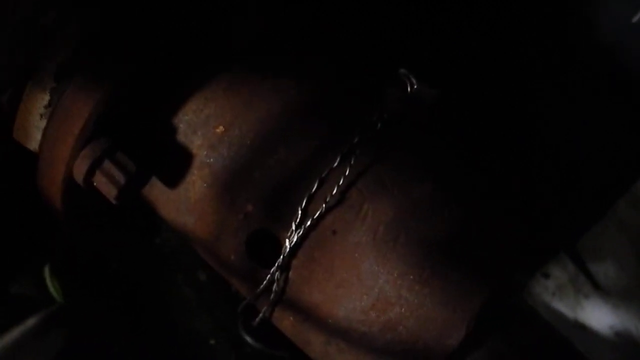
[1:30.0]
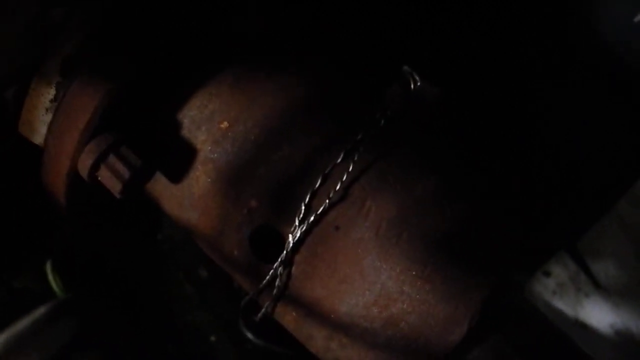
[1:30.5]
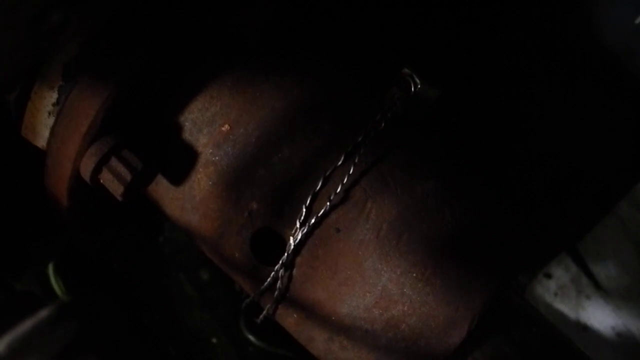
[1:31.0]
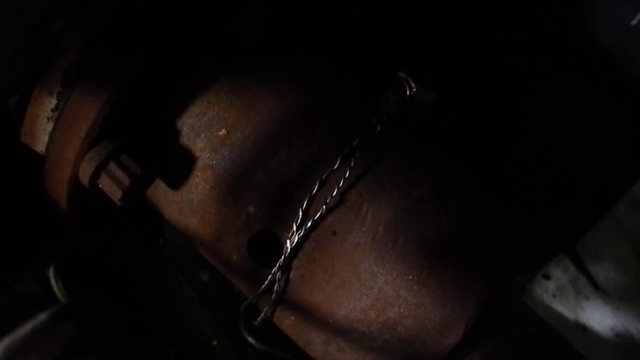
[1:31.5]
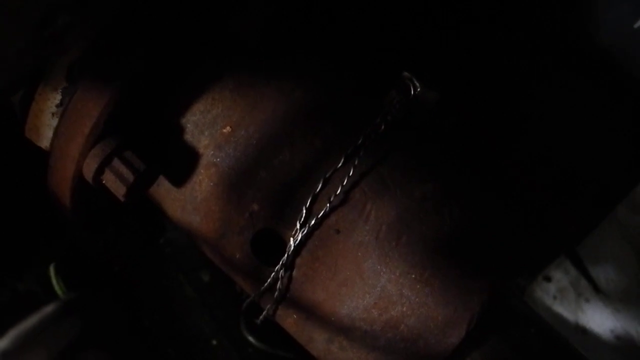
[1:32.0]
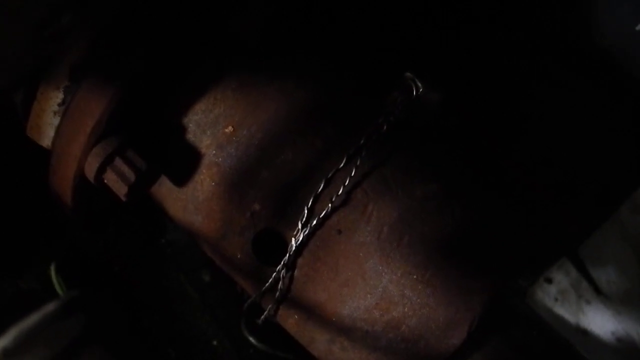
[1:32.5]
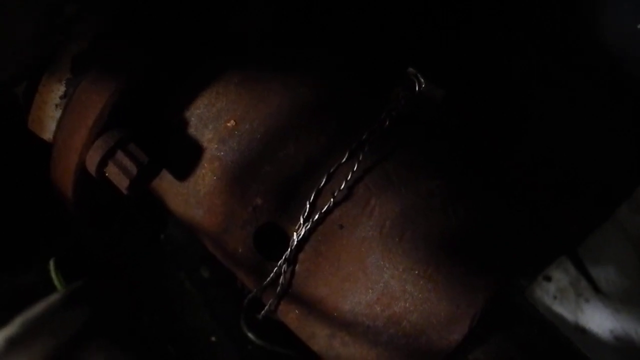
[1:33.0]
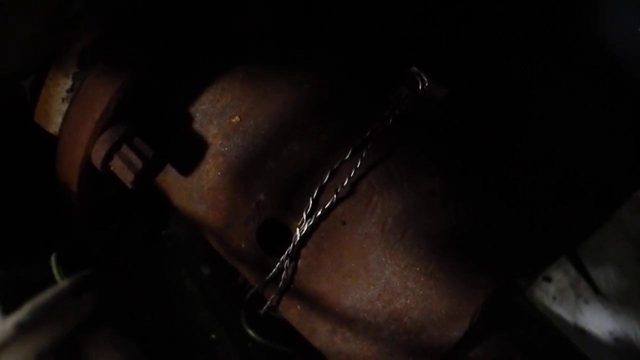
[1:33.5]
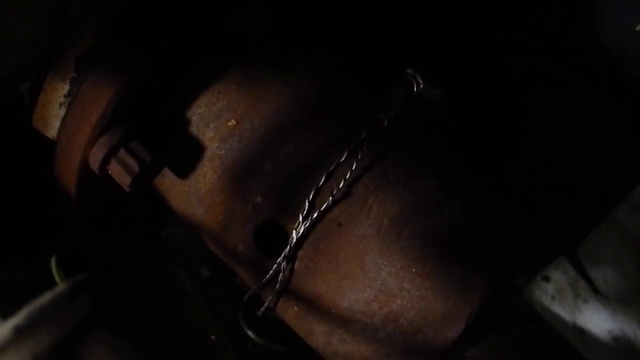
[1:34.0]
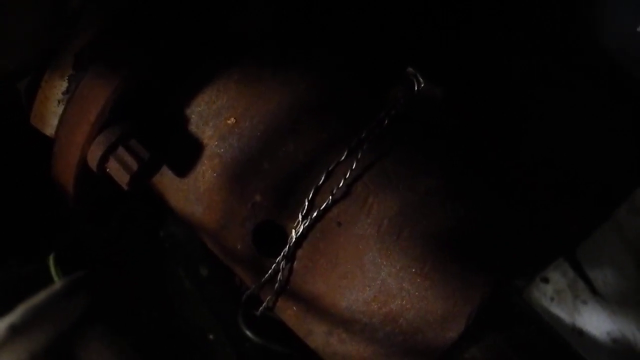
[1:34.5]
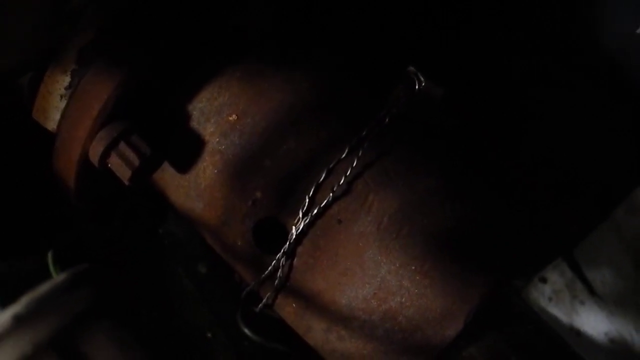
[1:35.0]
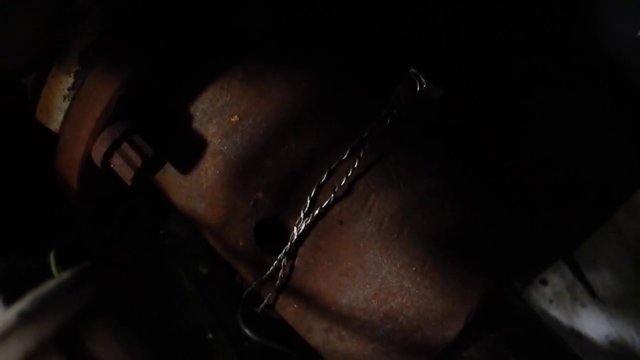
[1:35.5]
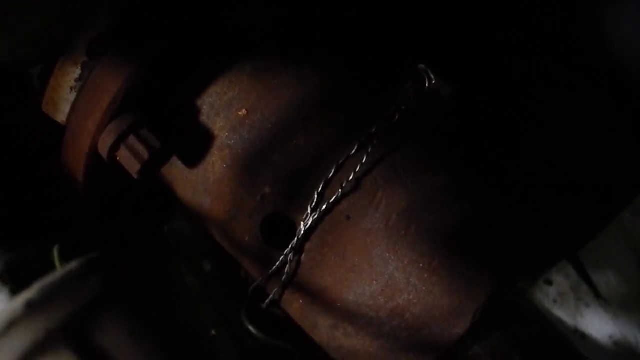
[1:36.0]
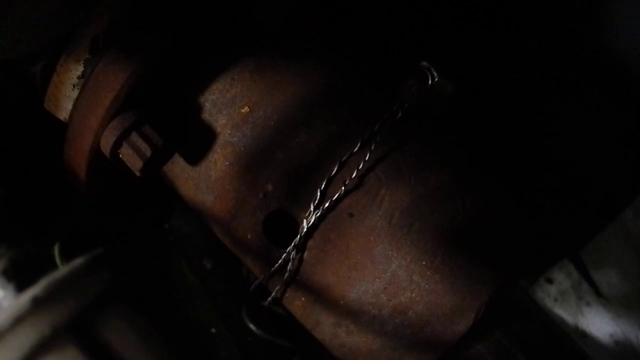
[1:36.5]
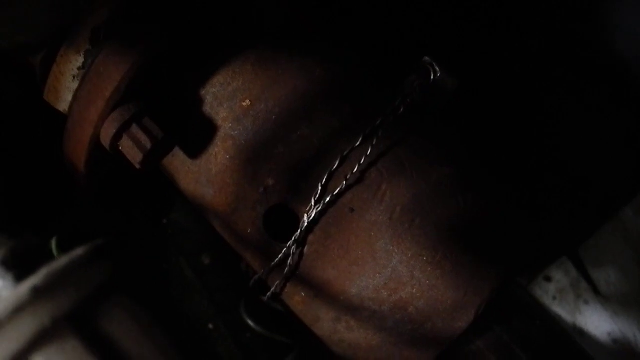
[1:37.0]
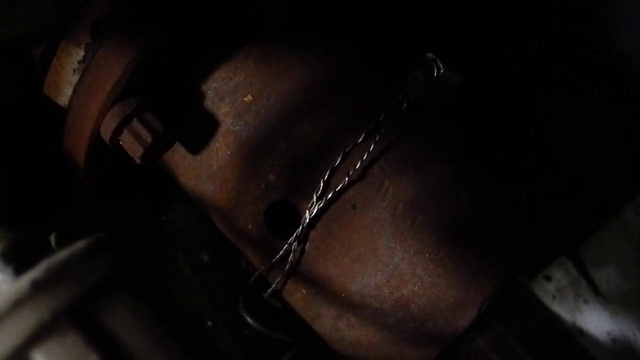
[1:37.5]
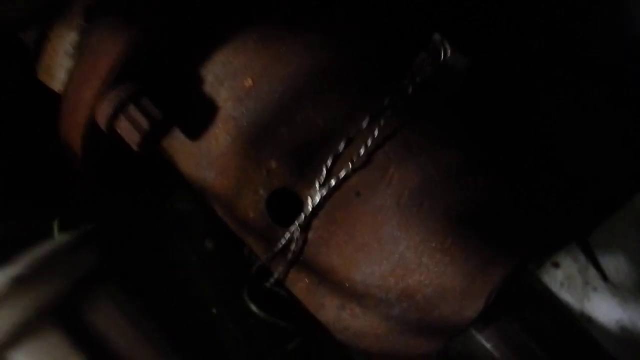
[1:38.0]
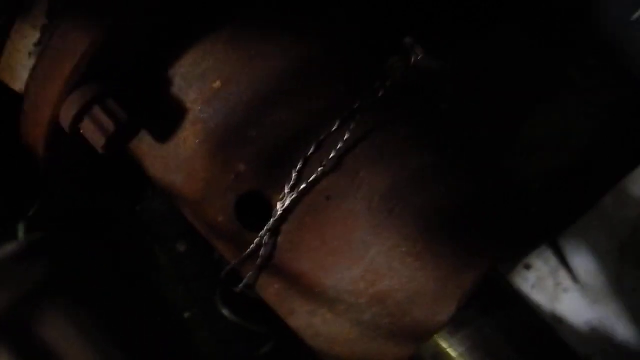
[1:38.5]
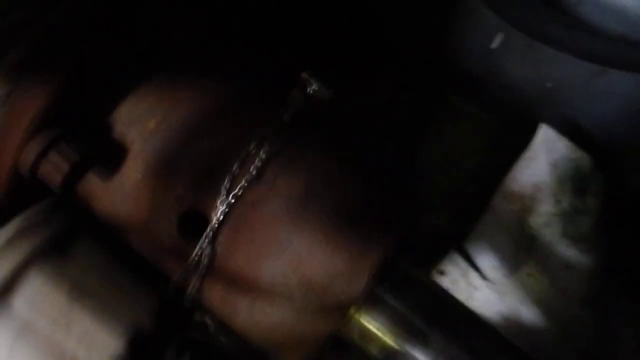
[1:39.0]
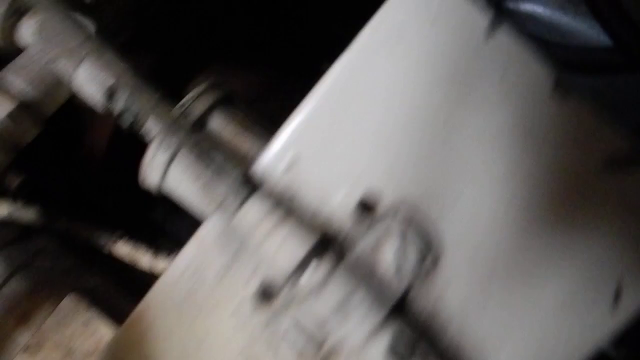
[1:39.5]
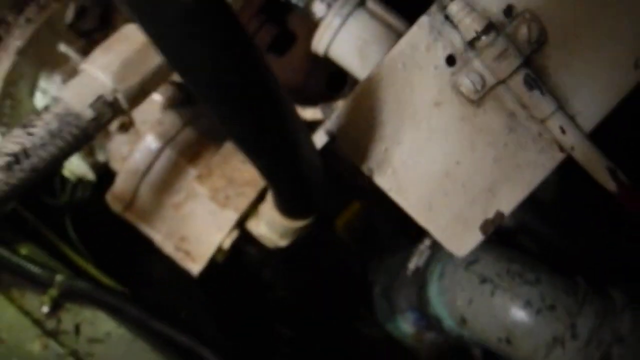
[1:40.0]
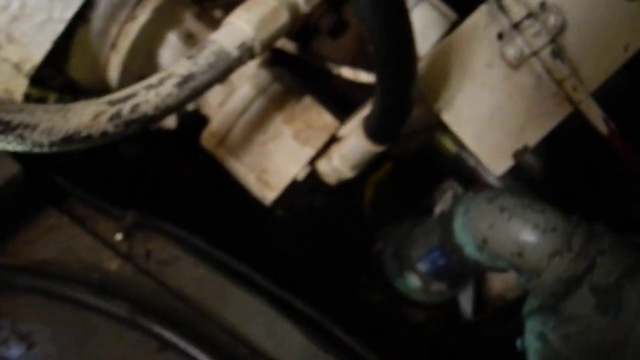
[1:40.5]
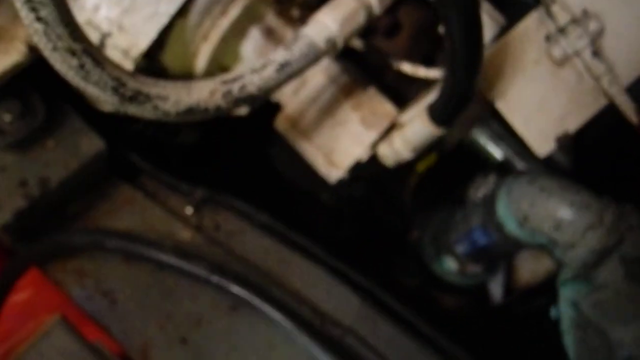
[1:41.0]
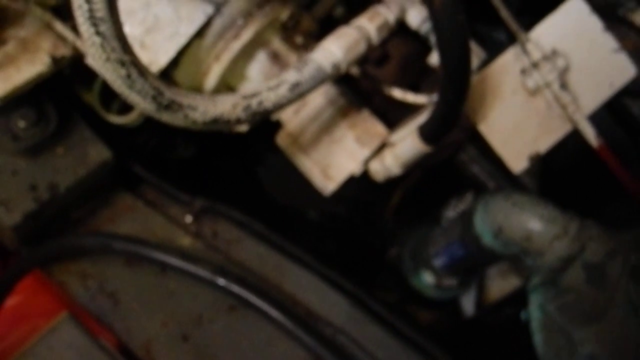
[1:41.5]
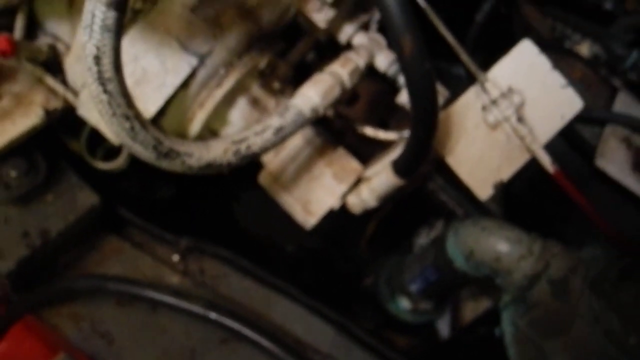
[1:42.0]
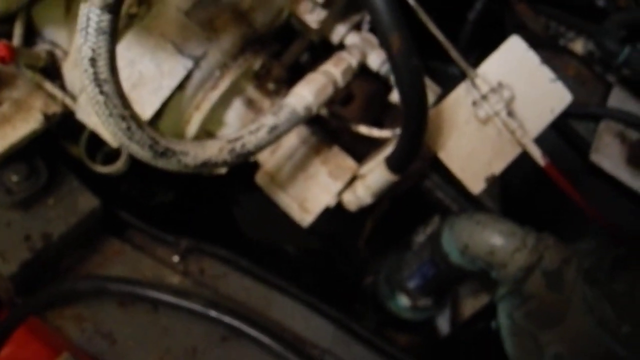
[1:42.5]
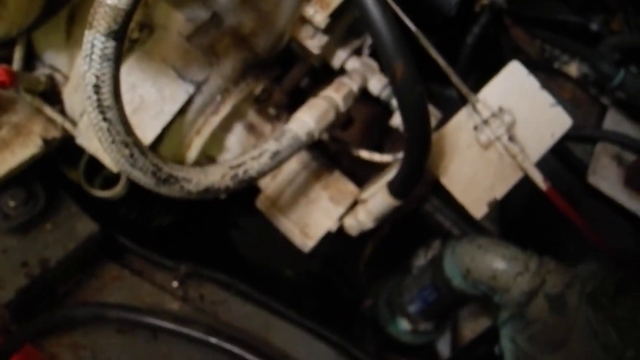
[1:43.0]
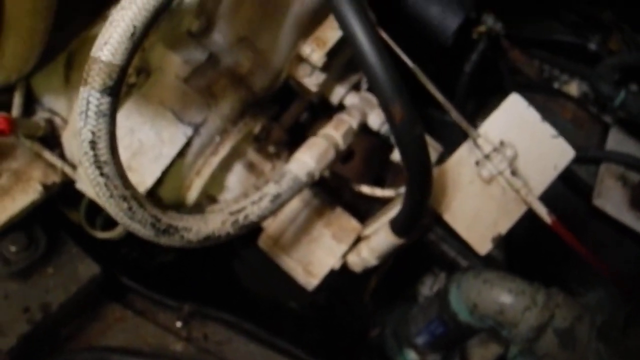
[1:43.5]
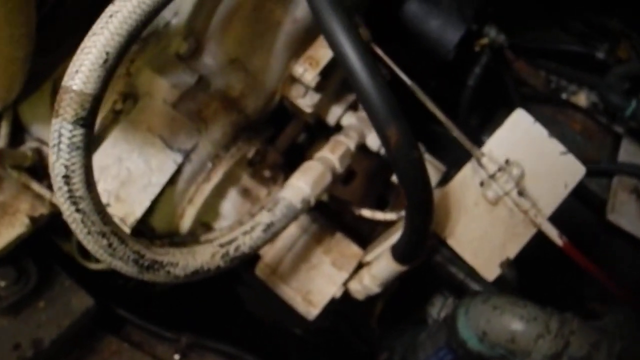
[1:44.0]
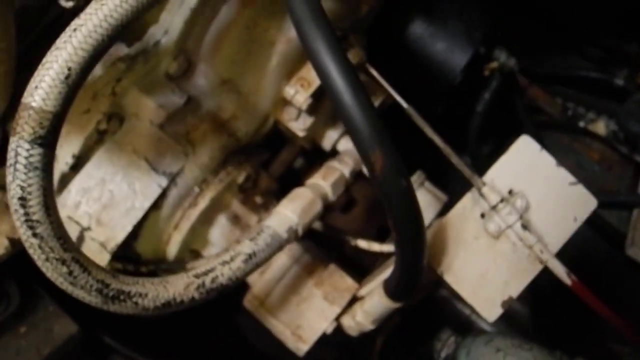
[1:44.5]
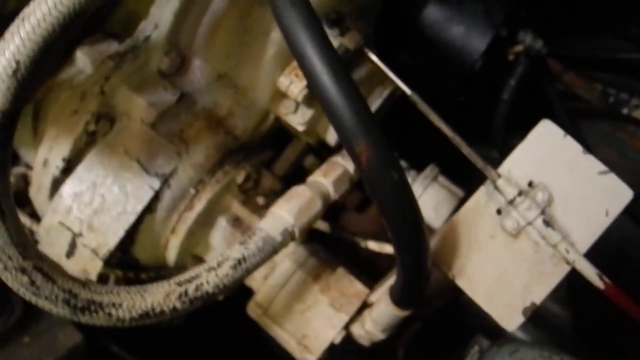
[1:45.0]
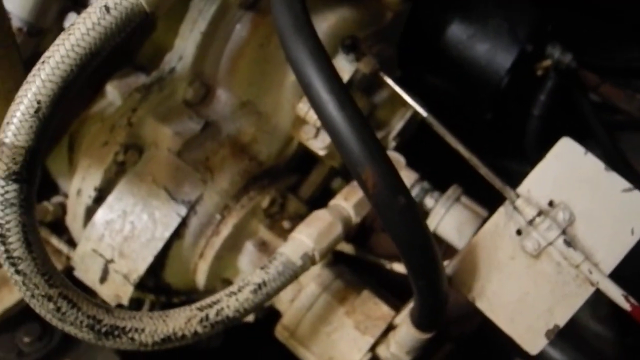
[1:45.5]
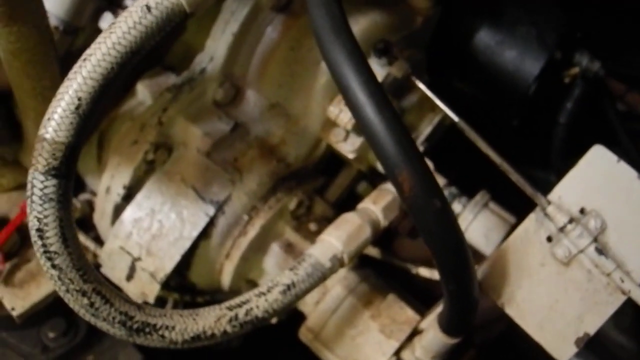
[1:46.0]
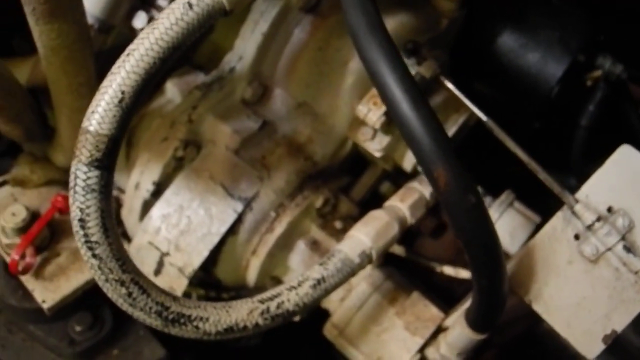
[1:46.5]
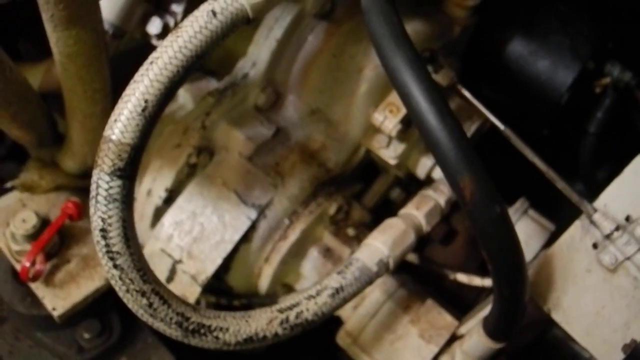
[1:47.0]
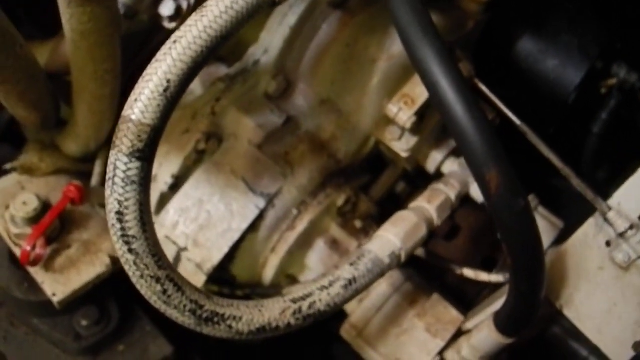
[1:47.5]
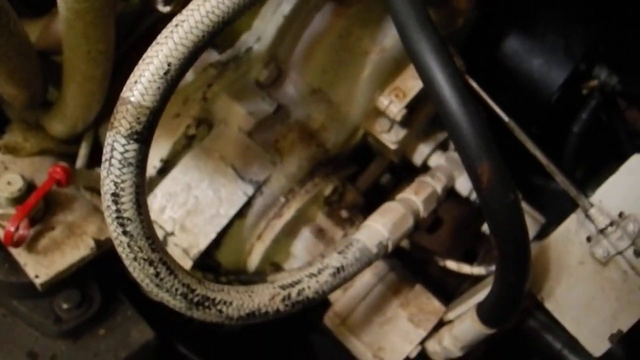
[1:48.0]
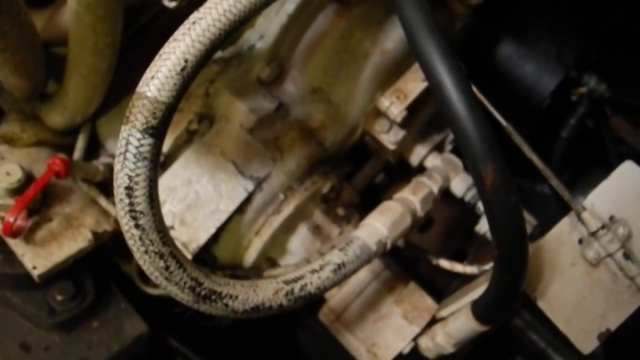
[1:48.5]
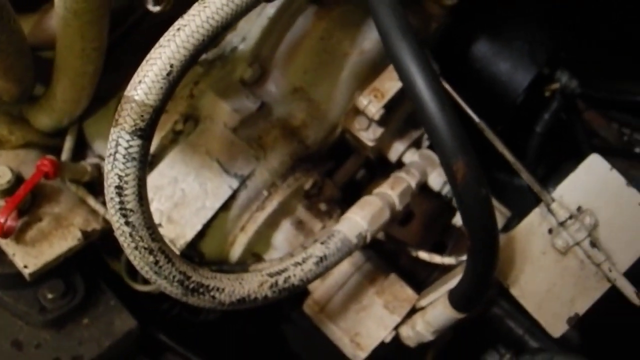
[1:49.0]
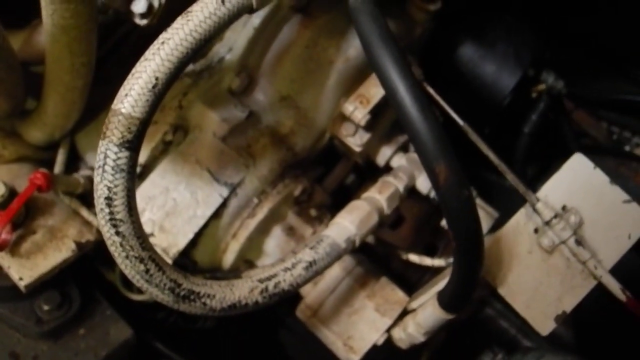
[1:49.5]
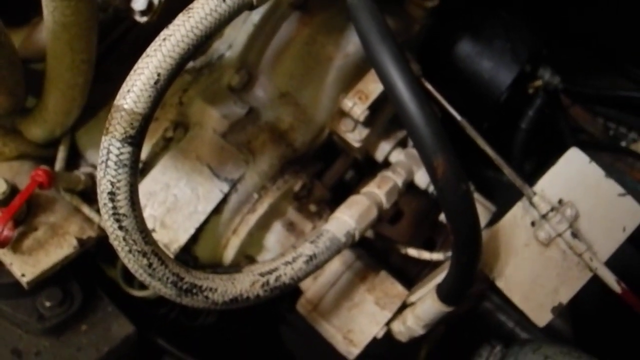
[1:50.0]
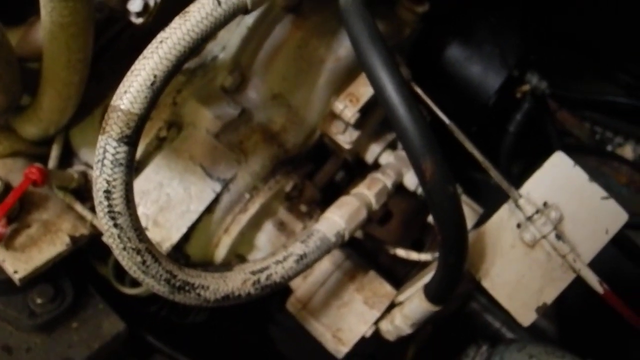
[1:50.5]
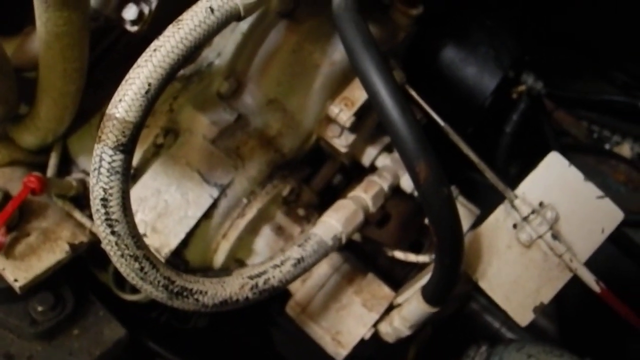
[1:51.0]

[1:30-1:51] A rusty cylindrical piece that is part of a motor or something extends from the top left of the screen to the bottom middle of the screen. On the left side of it, a piece of wire is wrapped around the rusty cylindrical piece twice. There is a hole in the front of it. The camera is slightly shaking as it stares at the rusty piece with the silver wire wrapped around it. On the bottom left side of the screen there looks to be something white. The camera pulls out of the engine, showing a section of the engine or something that looks like it has a black cable connected to it, running to the top middle of the screen. To the left of that, a white cable runs to the left of the screen, loops back around to the middle of the screen, and is connected to a white car part.